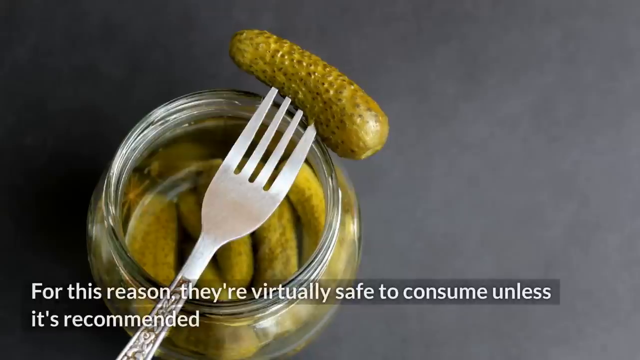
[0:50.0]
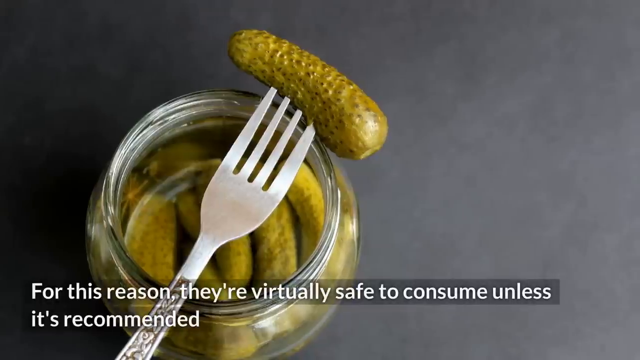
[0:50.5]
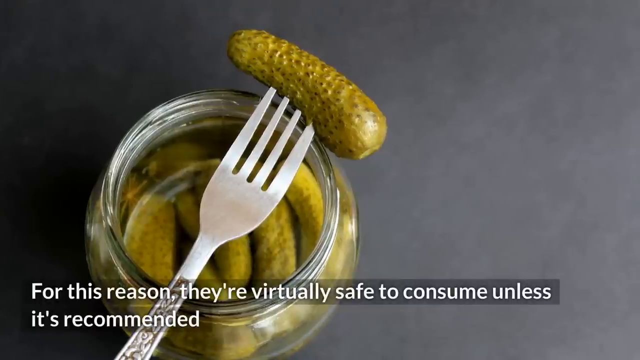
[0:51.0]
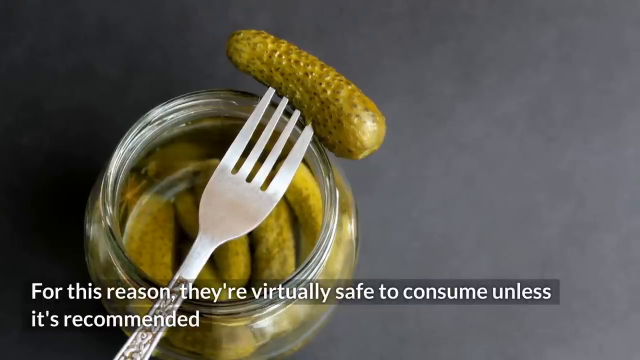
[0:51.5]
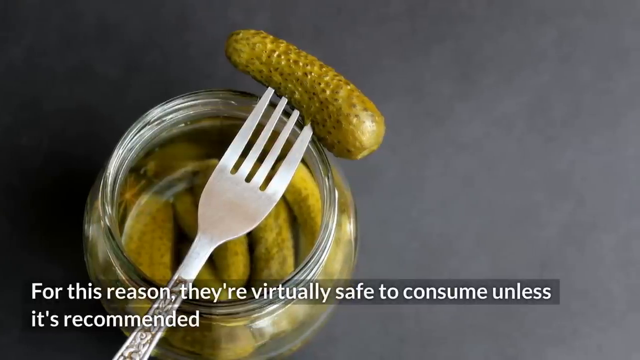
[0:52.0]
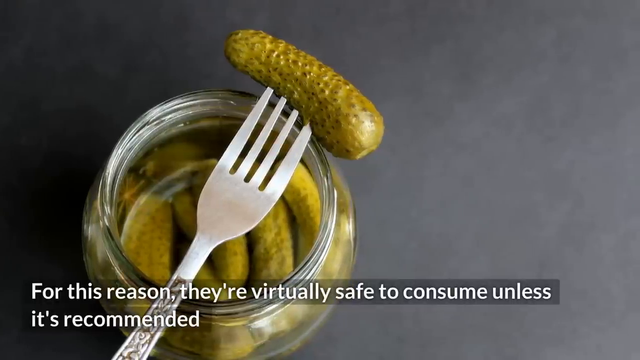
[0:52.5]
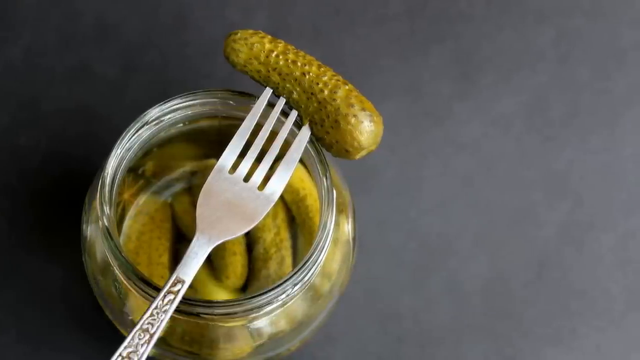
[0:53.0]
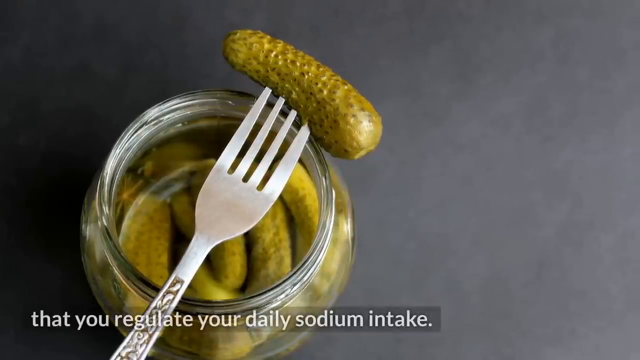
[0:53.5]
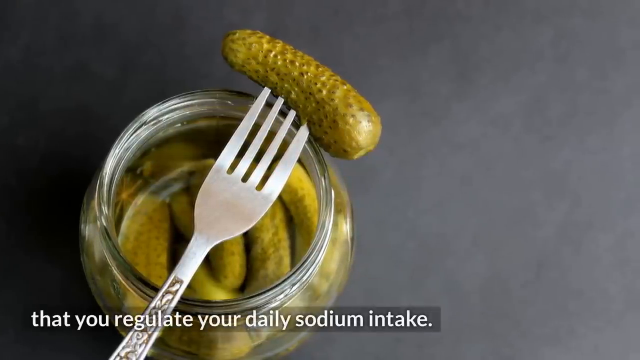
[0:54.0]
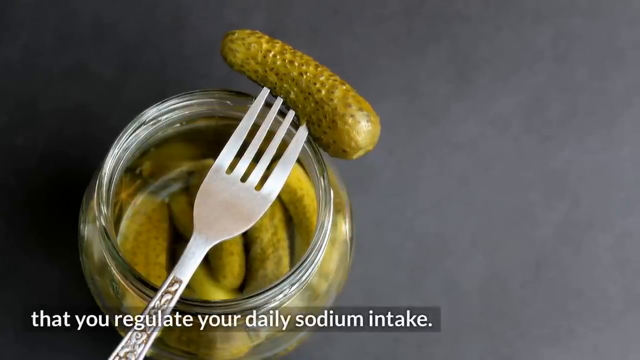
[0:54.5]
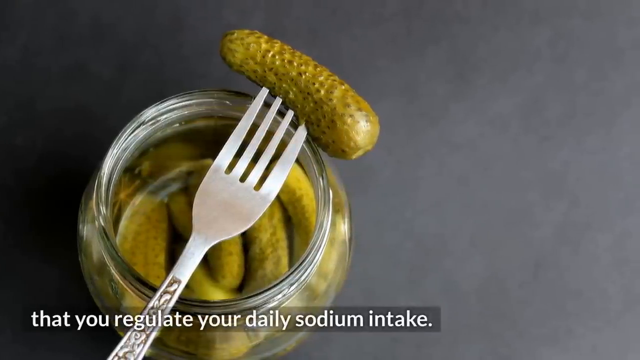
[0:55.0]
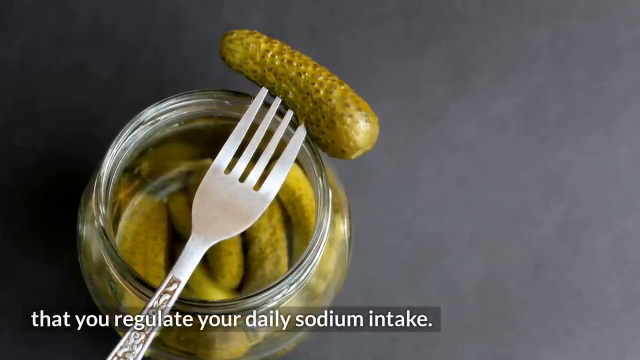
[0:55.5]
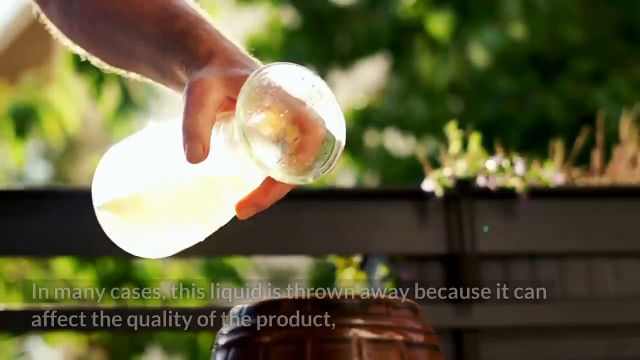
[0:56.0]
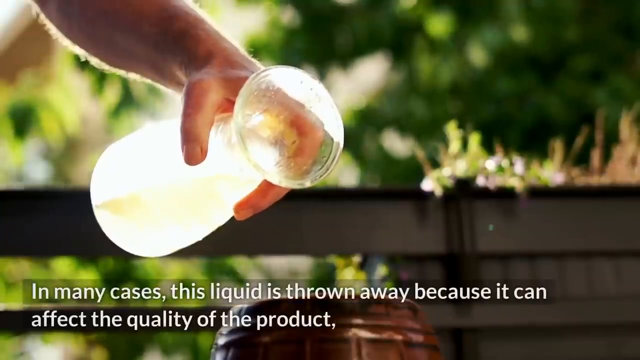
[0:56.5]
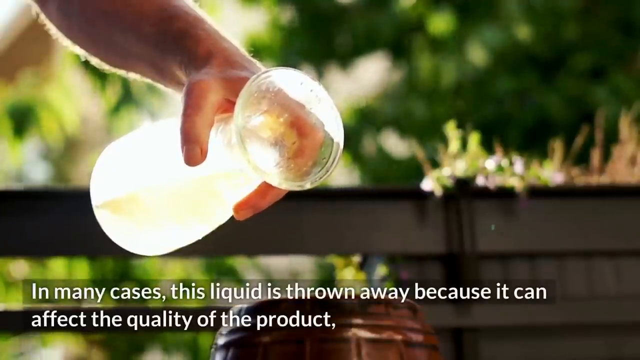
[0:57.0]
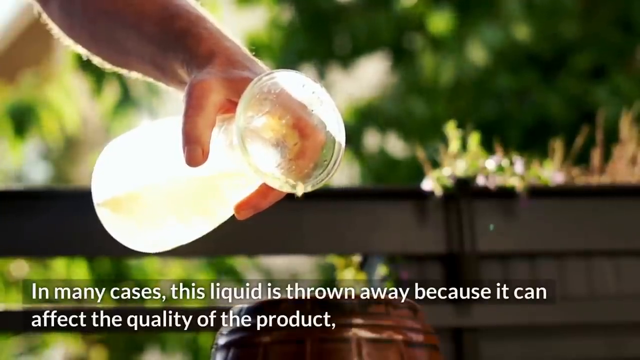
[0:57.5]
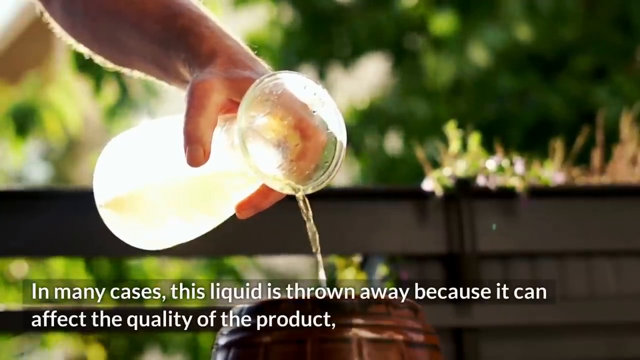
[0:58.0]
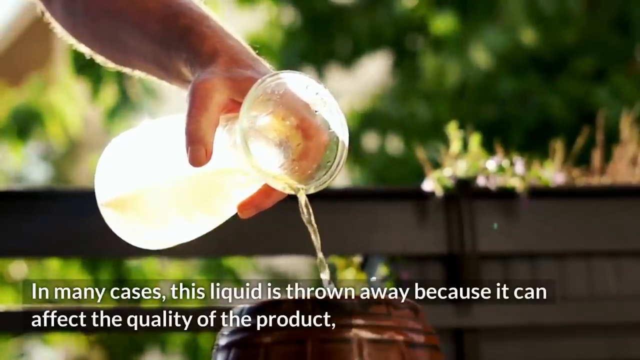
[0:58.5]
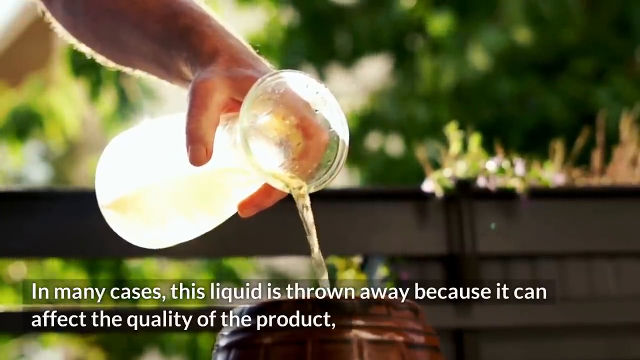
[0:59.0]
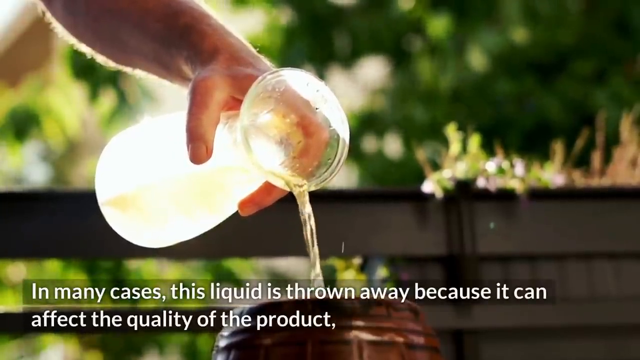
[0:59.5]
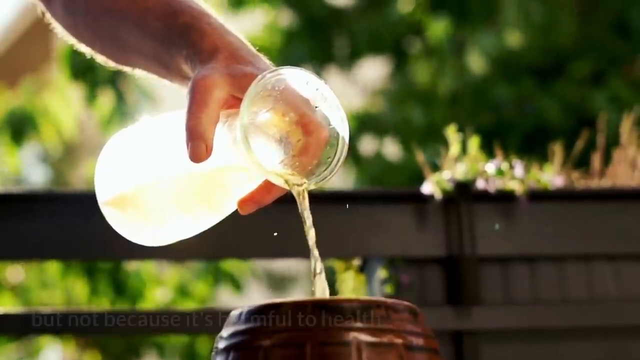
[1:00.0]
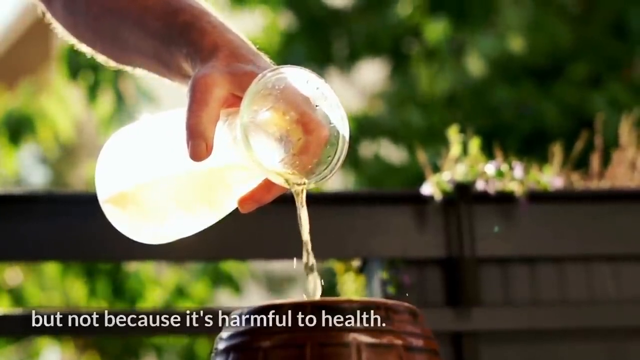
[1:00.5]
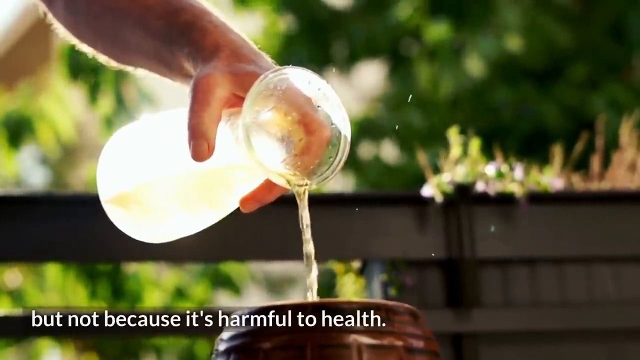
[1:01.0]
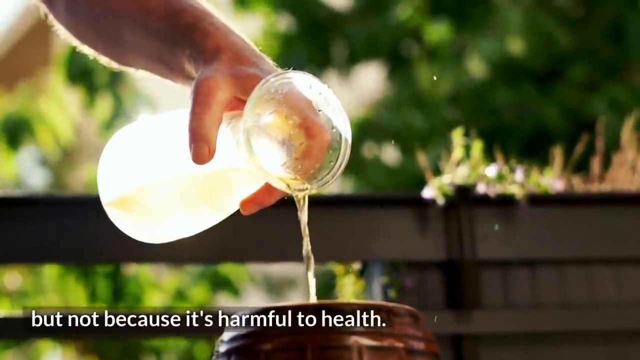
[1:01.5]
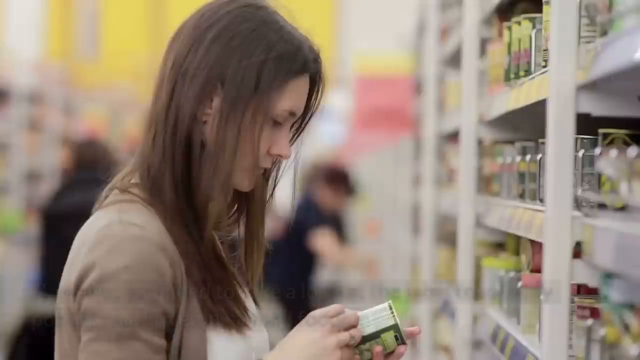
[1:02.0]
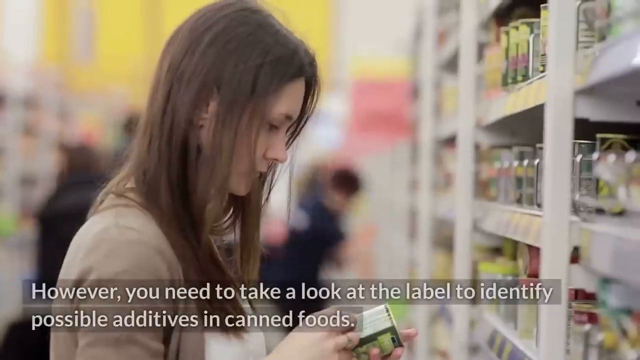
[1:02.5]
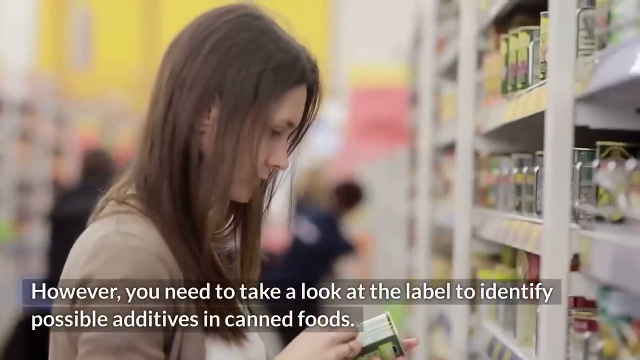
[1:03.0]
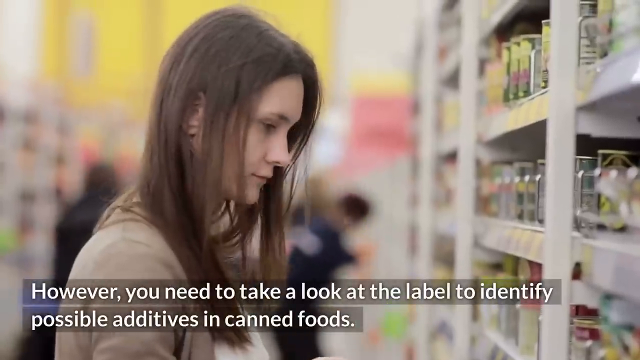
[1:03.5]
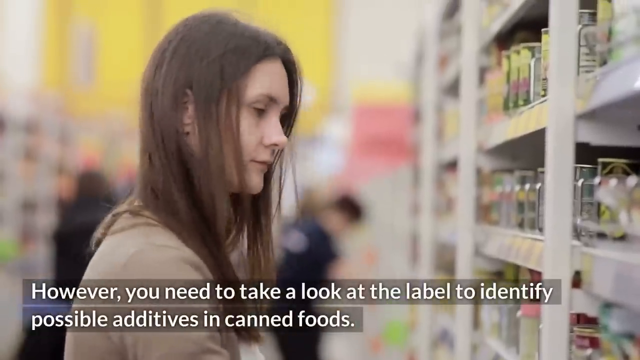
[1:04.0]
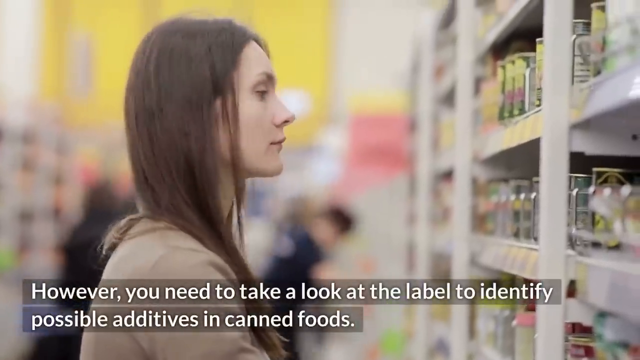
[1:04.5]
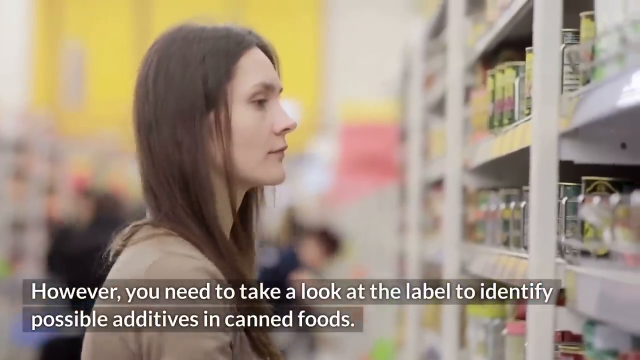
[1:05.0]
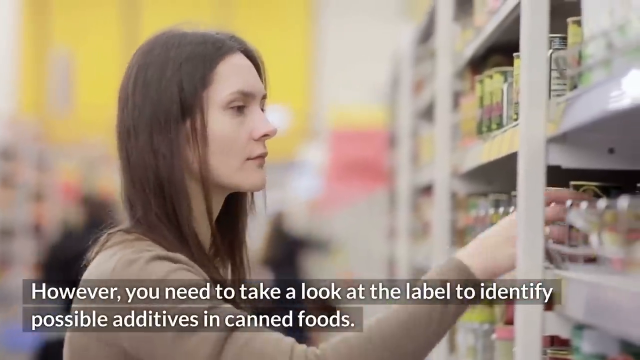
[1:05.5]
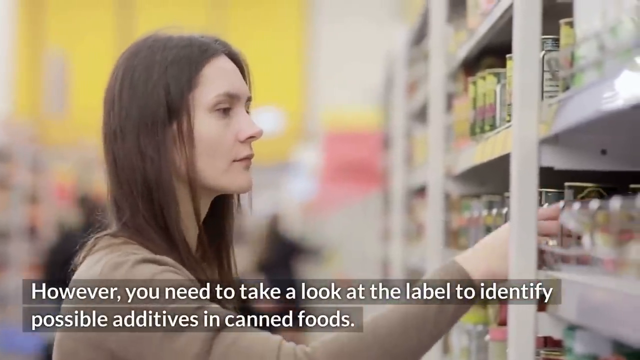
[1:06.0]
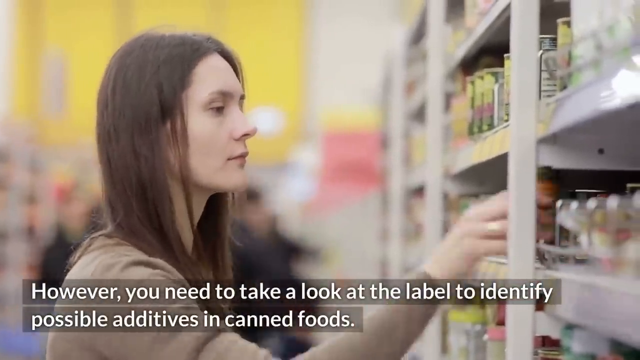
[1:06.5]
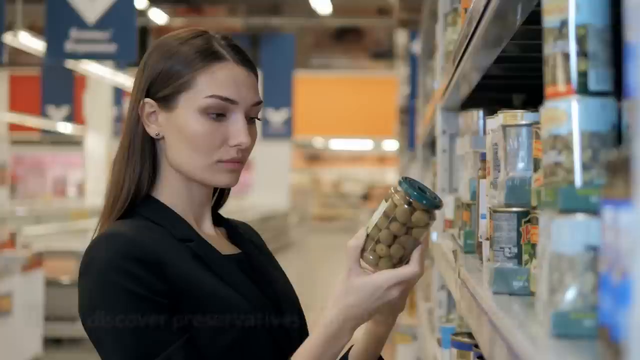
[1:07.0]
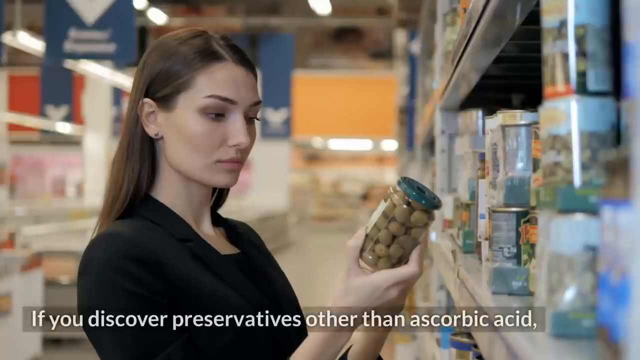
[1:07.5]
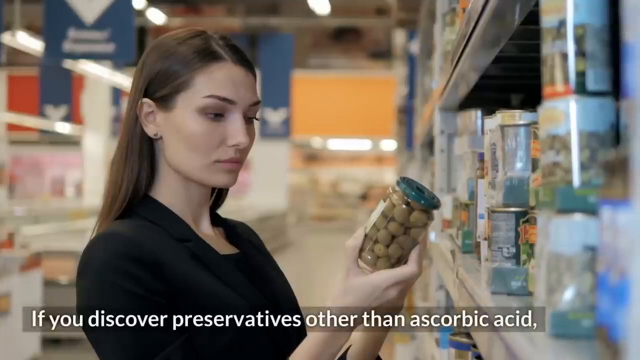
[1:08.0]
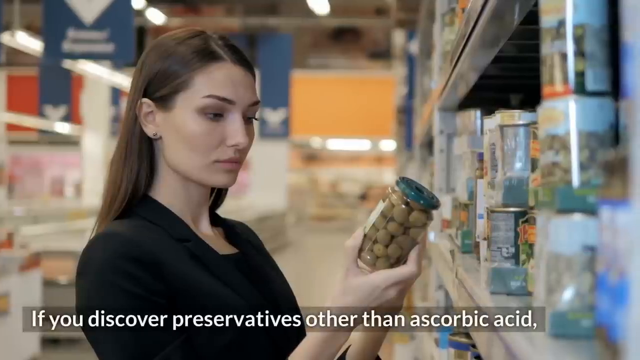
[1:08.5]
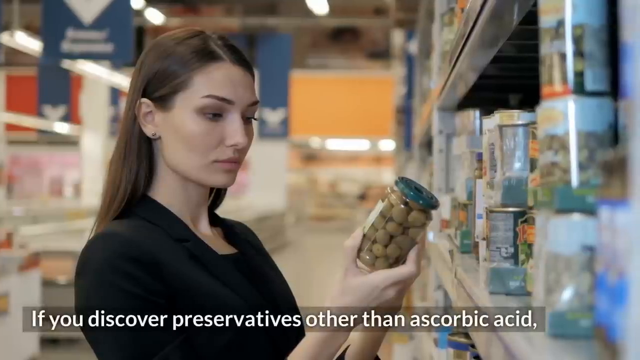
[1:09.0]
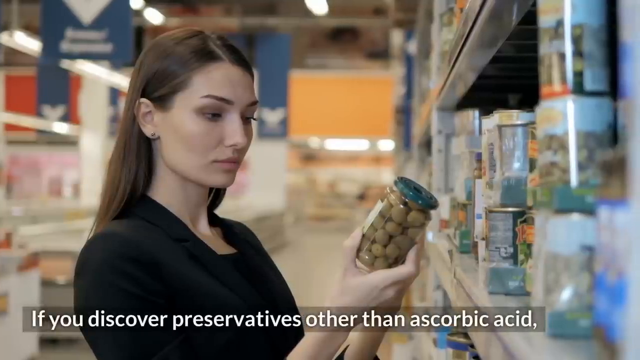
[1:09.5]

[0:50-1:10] A man holds a glass with a liquid in it, apparently outside, with sunlight behind him along with what look like planter boxes and trees. The text reads "in many cases, this liquid is thrown away because it can affect the quality of the product." The scene shifts to a woman in a store with brown hair and a brown shirt, looking at different products on the shelf and reading the labels, with the text "however, you need to take a look at the label to identify possible additives in canned foods." Next, a different woman in a black shirt also looks at labels on the shelf while holding a jar of olives, with the text "if you discover preservatives other than ascorbic acid." The video quality somewhat degrades at this point.